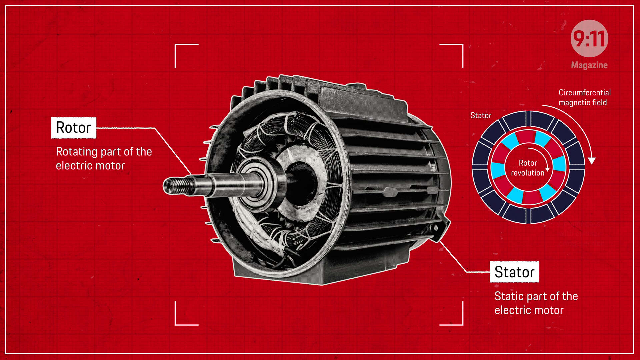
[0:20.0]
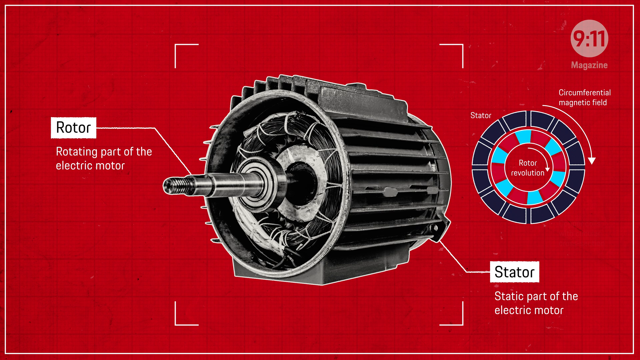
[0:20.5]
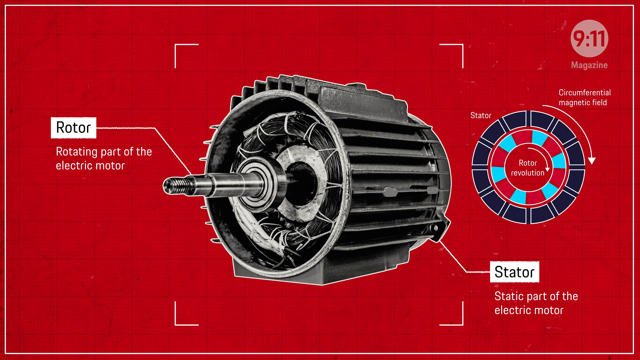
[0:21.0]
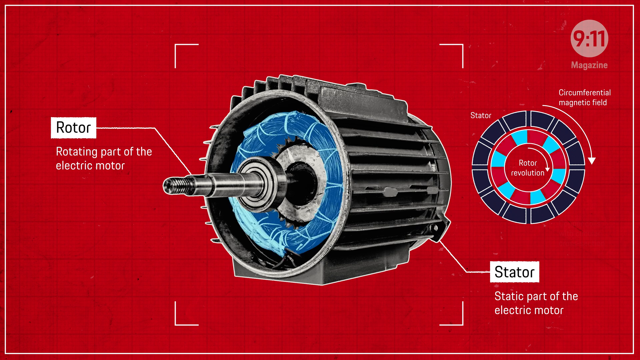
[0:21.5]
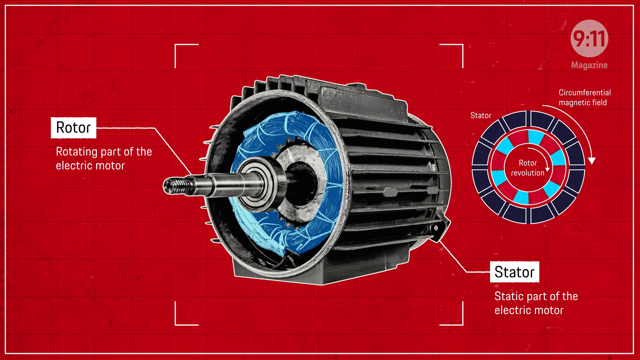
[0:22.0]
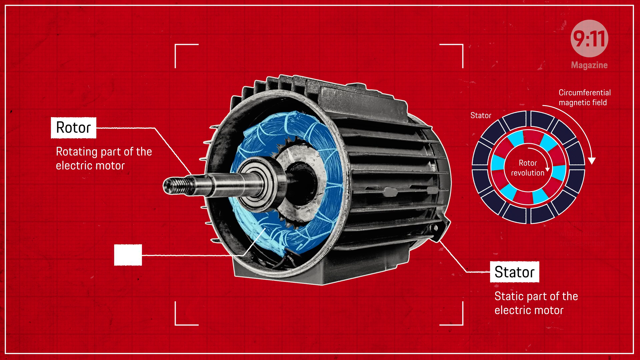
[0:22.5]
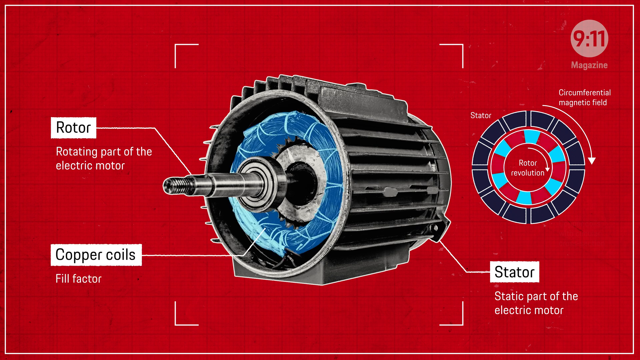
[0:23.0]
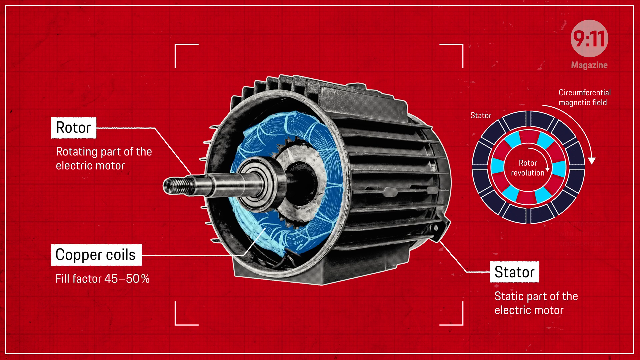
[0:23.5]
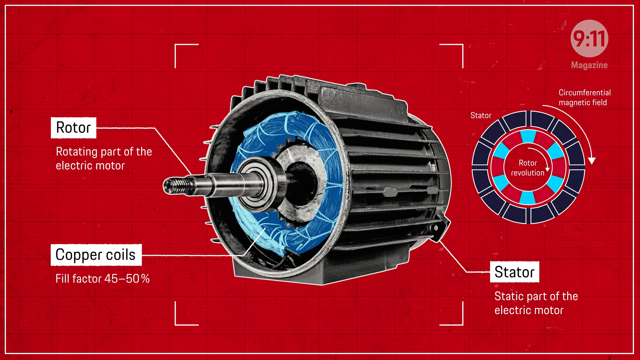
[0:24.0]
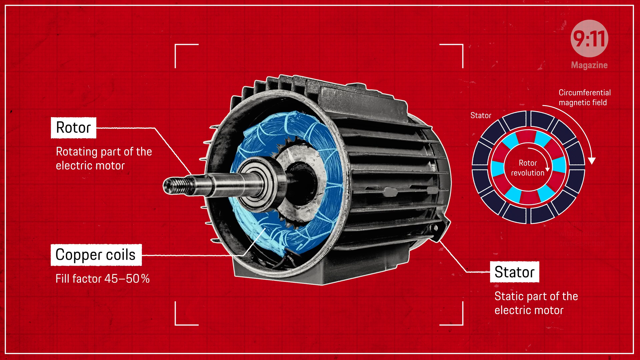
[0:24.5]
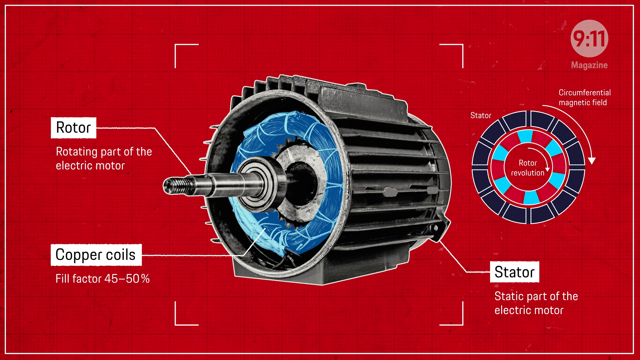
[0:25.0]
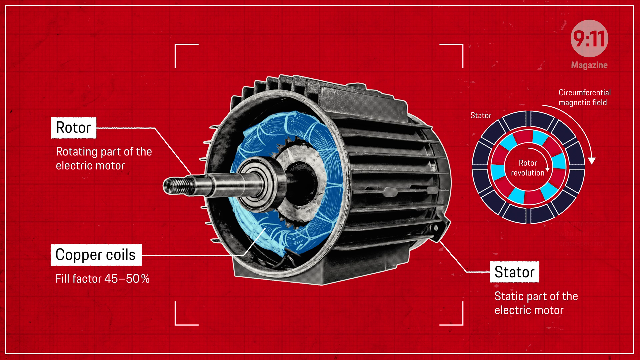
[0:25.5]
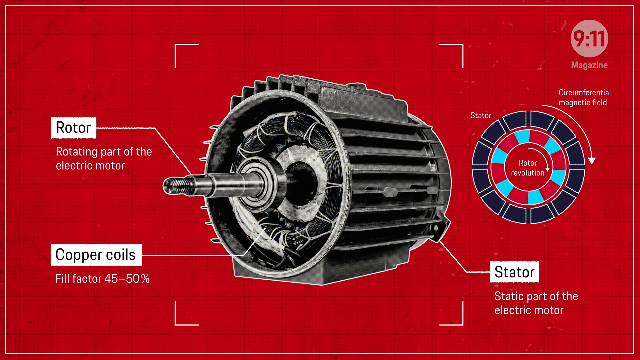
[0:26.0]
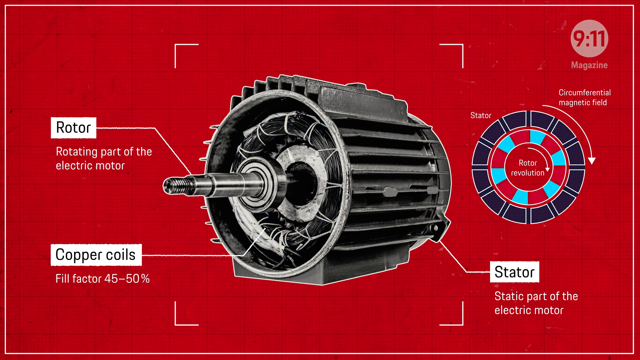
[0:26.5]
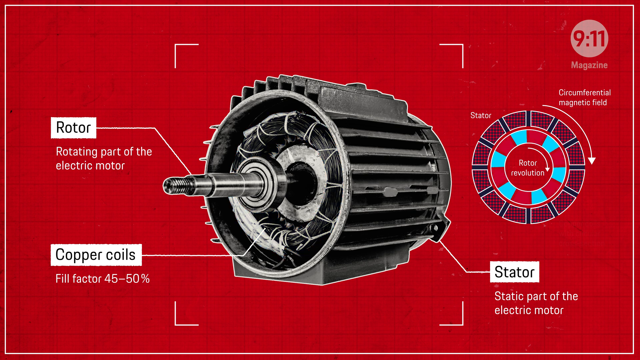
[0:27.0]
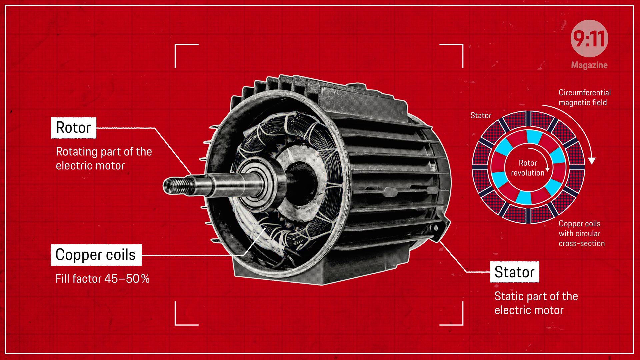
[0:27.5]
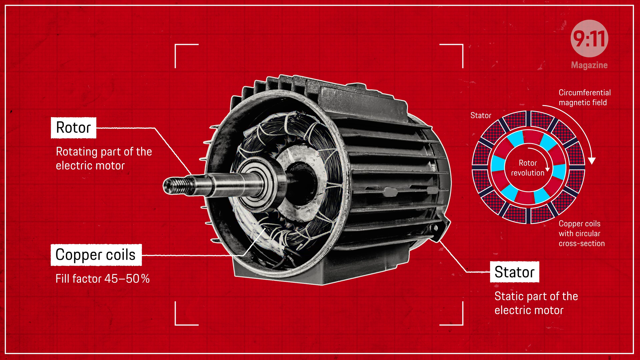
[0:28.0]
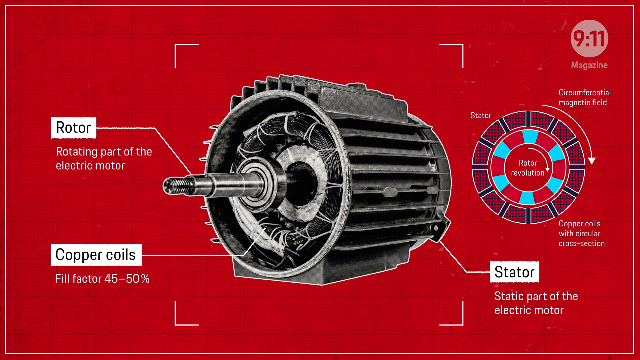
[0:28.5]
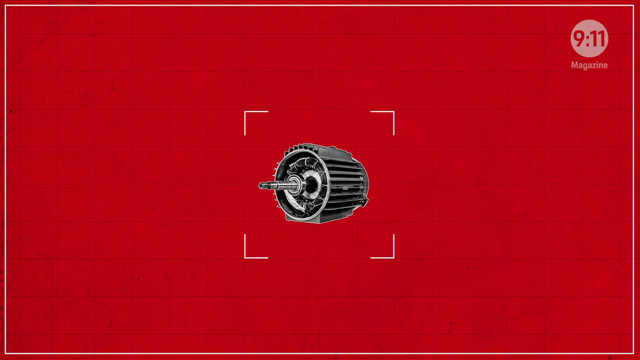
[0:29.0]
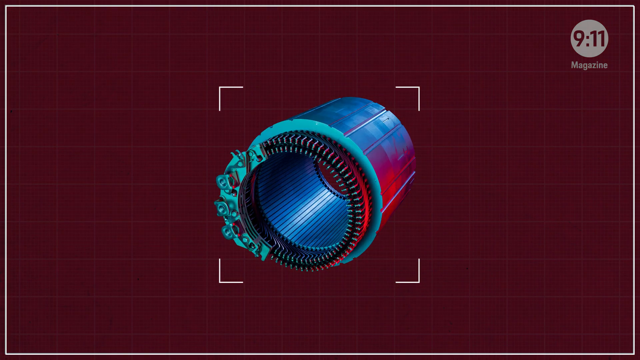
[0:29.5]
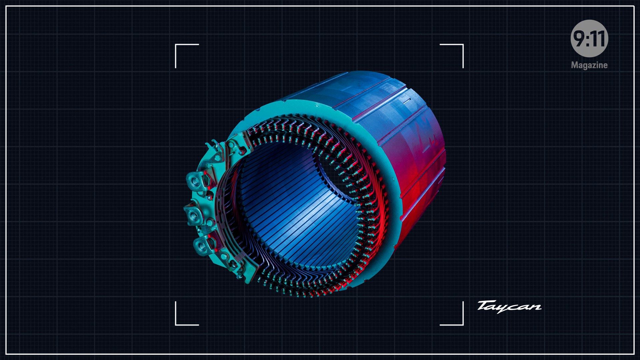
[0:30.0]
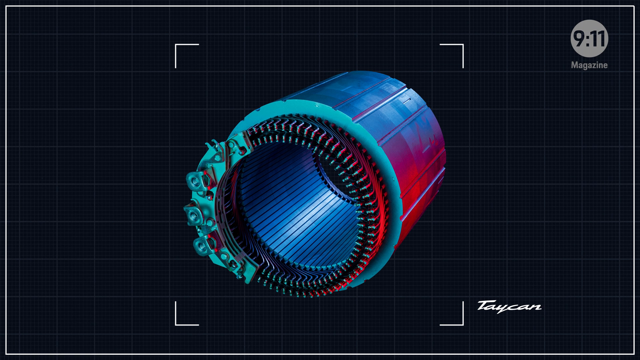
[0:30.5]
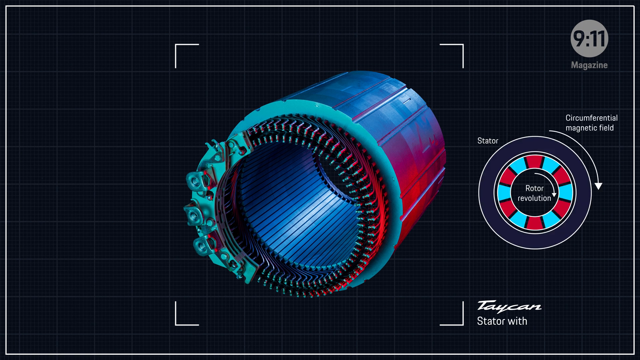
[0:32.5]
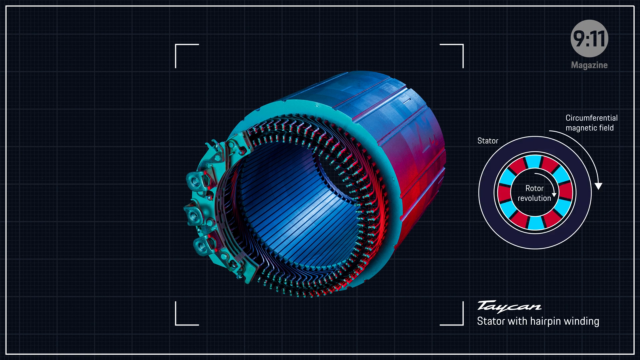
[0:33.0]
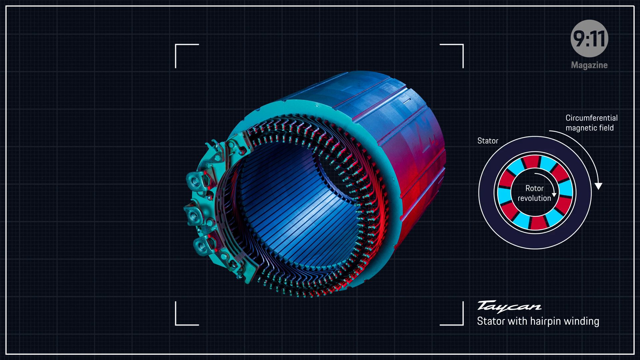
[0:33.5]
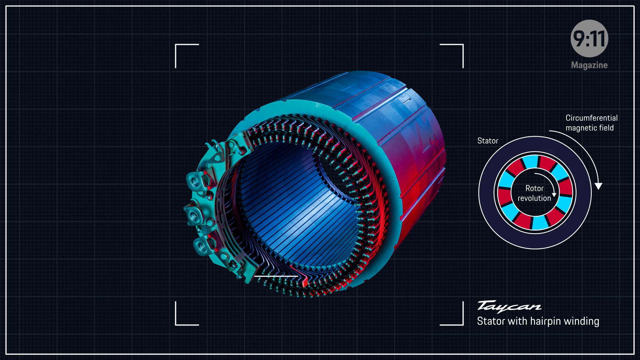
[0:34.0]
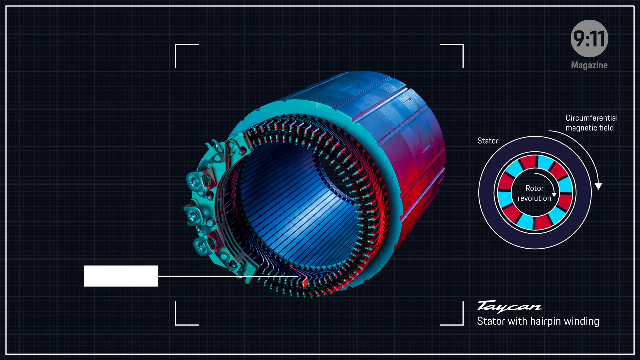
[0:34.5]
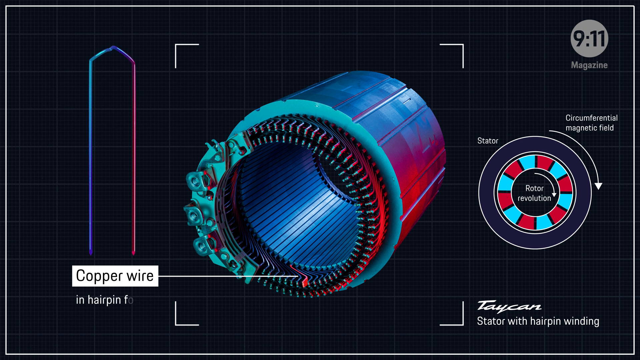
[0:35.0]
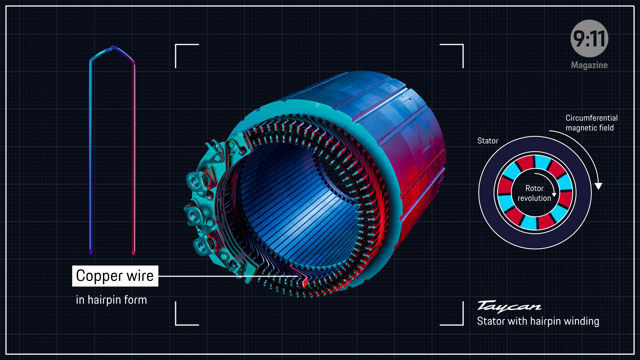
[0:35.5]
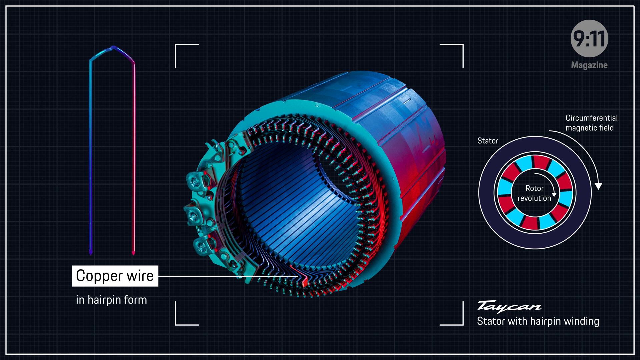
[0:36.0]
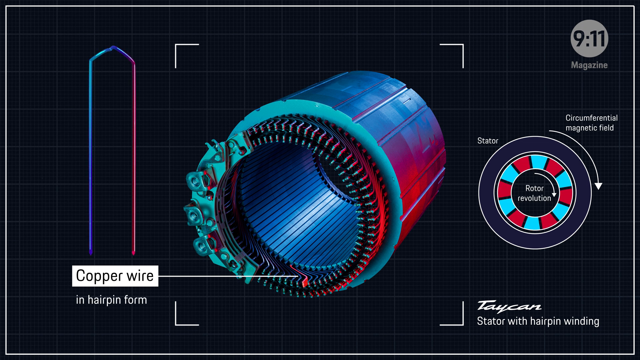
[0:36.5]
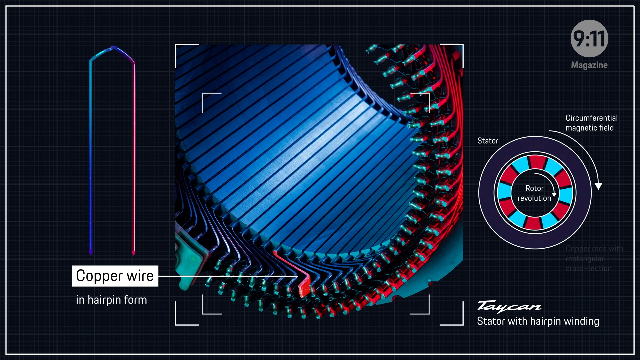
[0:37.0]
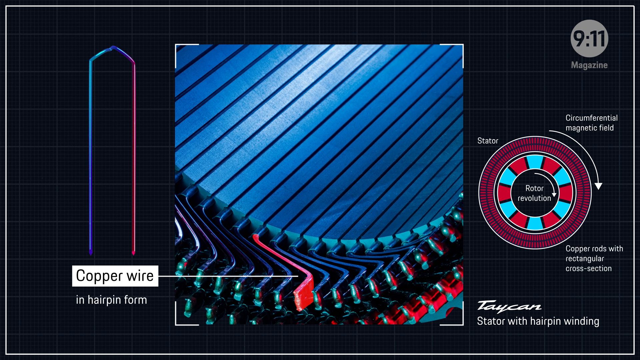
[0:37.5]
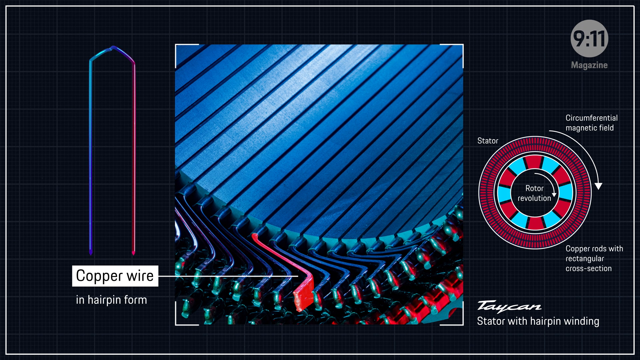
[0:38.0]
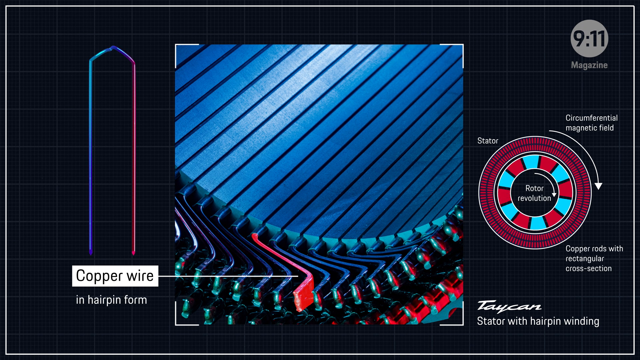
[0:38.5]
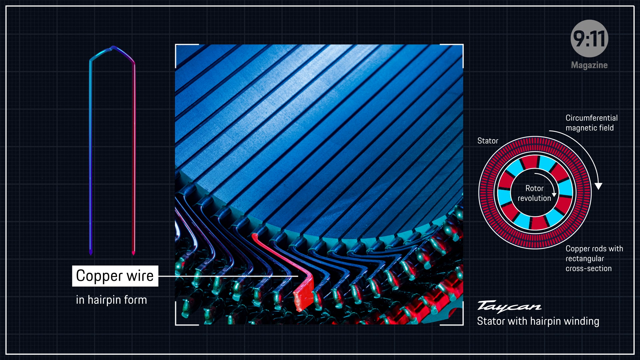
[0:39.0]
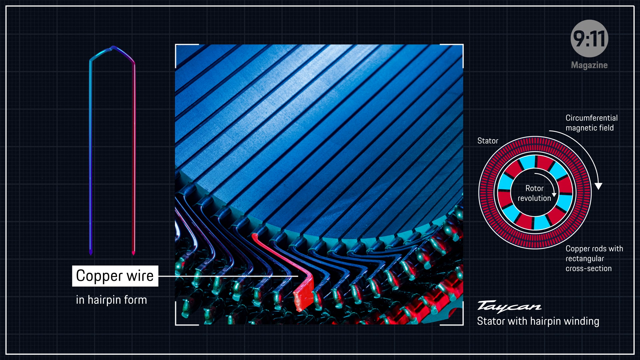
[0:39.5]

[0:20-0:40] The motor labels read rotor, the rotating part of the electric motor; stator, the static part of the electric motor; stator rotor revolution; and circumferential magnetic field. There are copper coils with a fill factor of 45 to 50 percent, and copper wire in hairpin form, while the rotor revolves non-stop. In the top right corner is written "9 to 11 magazine", with the 9 to 11 written like a time. The rotor is metal and has screw-like things in front of it; it looks like the motor of a fan. The background of the image is red, while the top is blue and white. "Stator" is written in blue while the other labels are written in white. The winding turns non-stop; some parts are black and others are red.